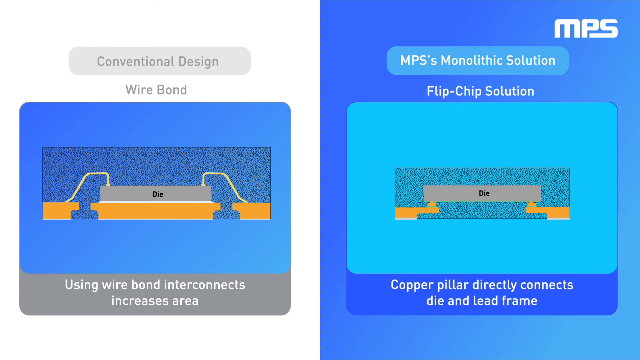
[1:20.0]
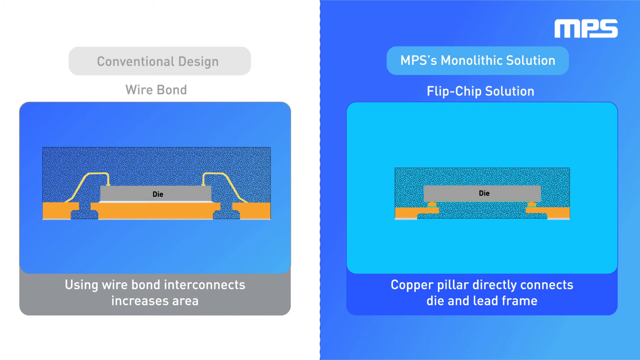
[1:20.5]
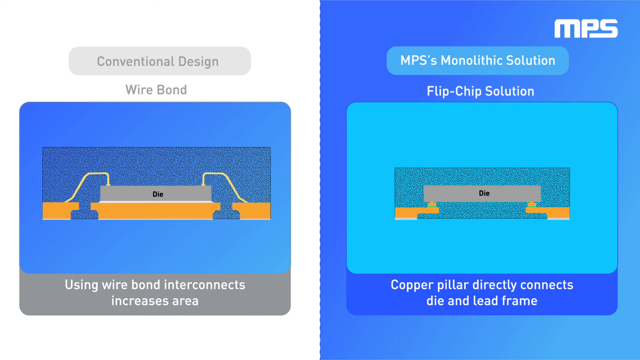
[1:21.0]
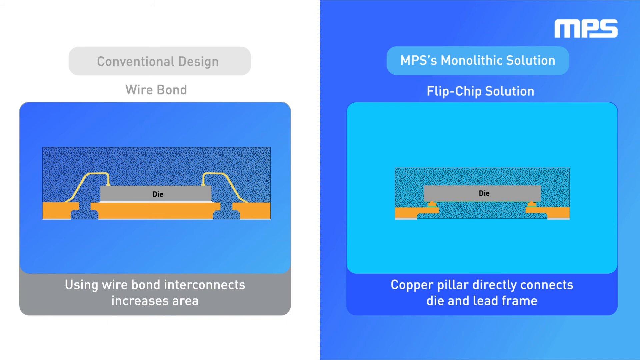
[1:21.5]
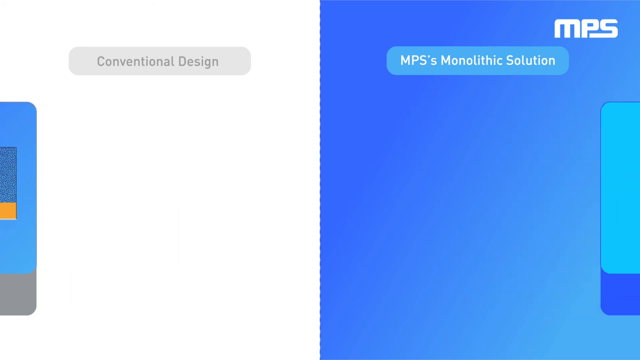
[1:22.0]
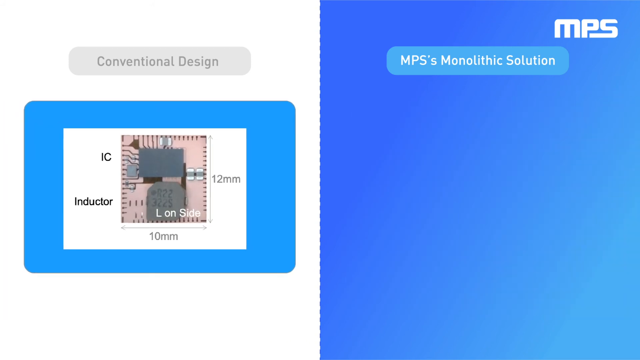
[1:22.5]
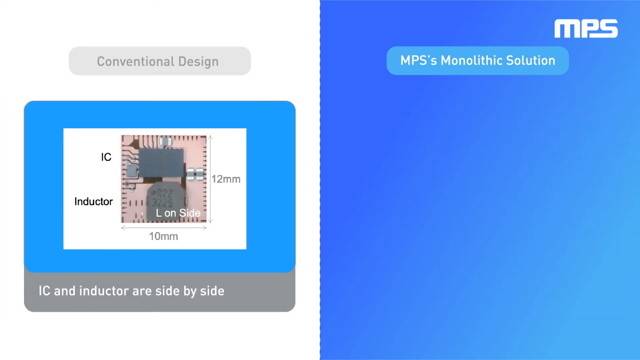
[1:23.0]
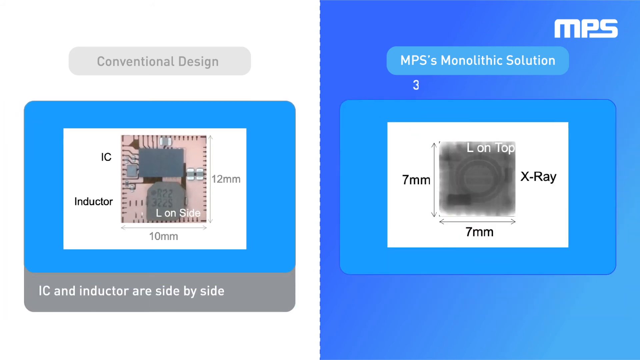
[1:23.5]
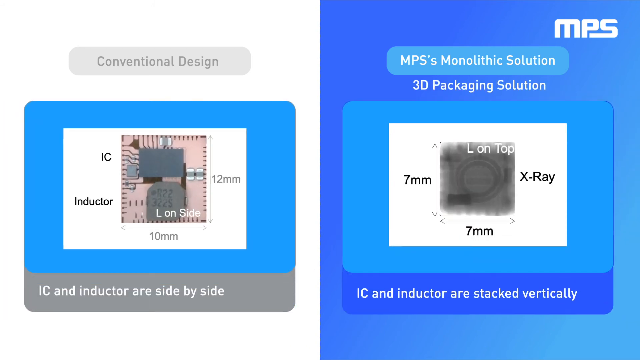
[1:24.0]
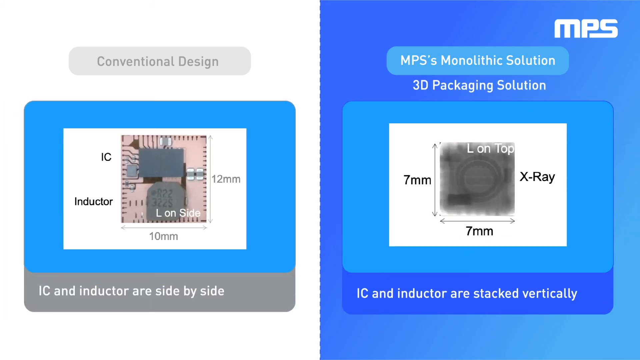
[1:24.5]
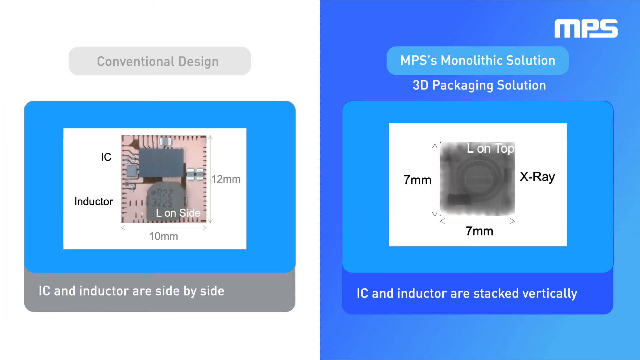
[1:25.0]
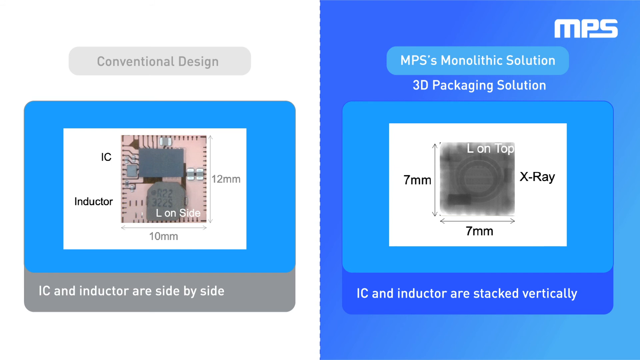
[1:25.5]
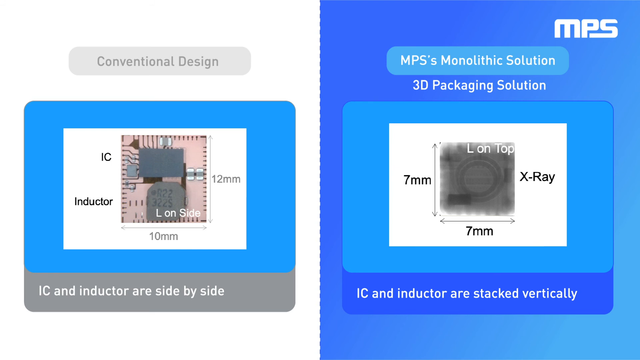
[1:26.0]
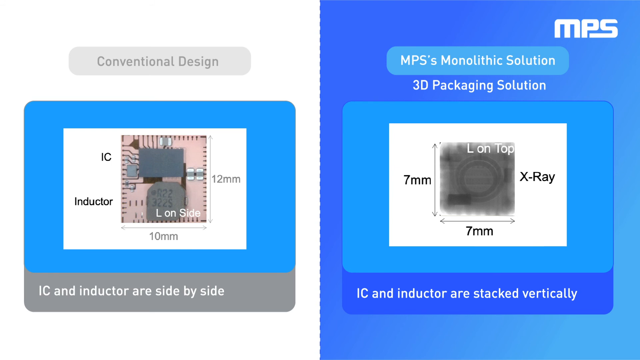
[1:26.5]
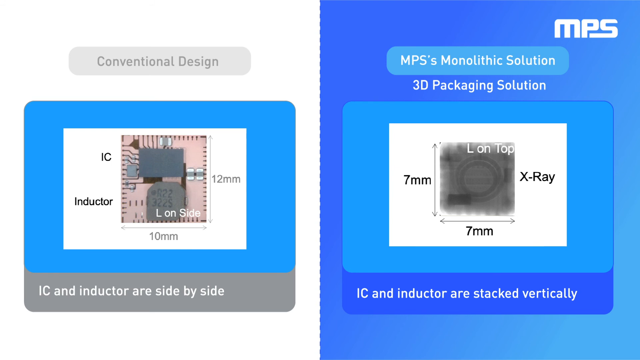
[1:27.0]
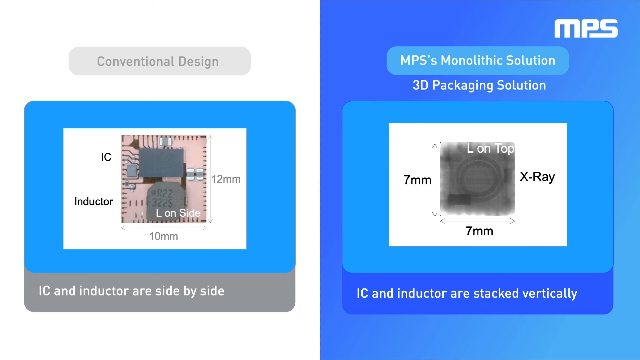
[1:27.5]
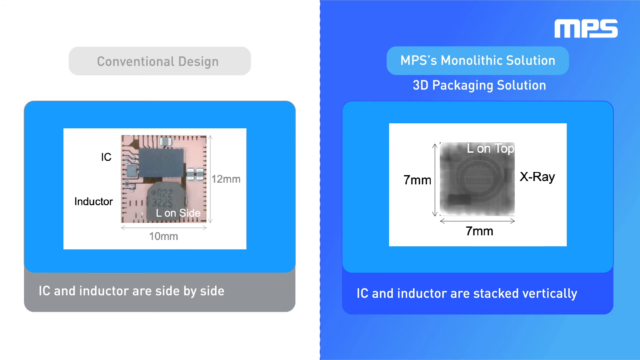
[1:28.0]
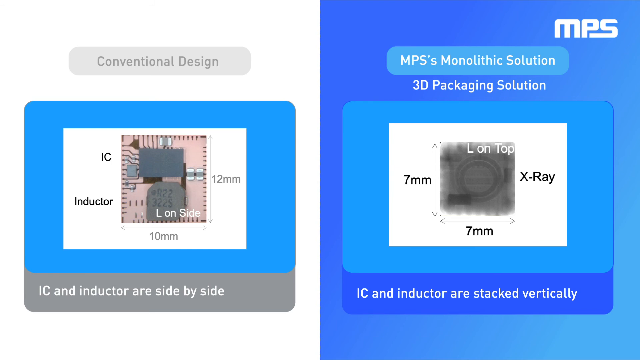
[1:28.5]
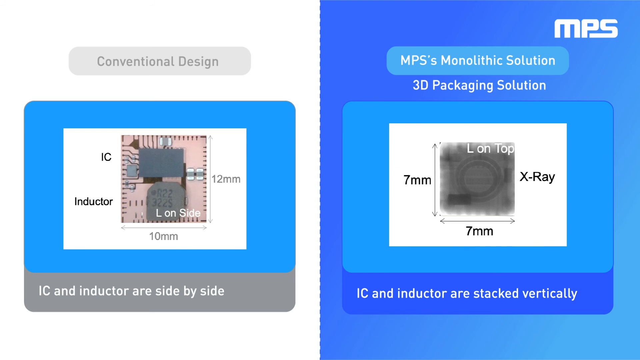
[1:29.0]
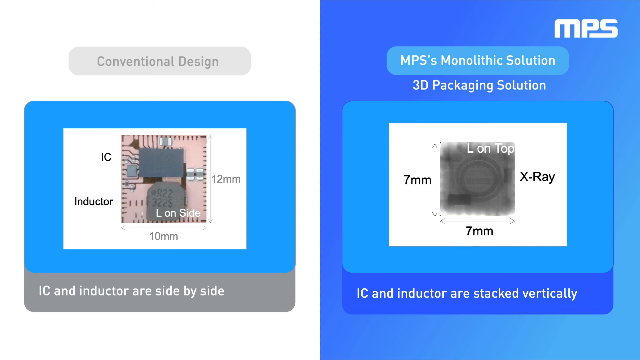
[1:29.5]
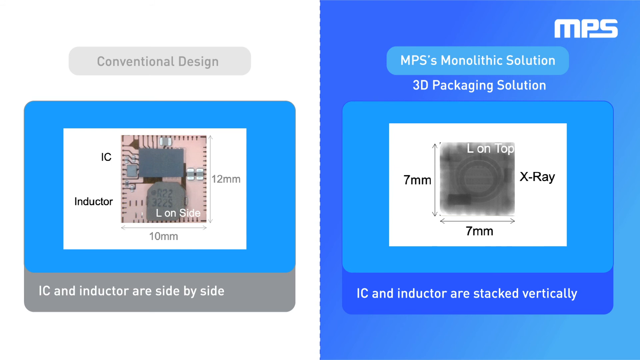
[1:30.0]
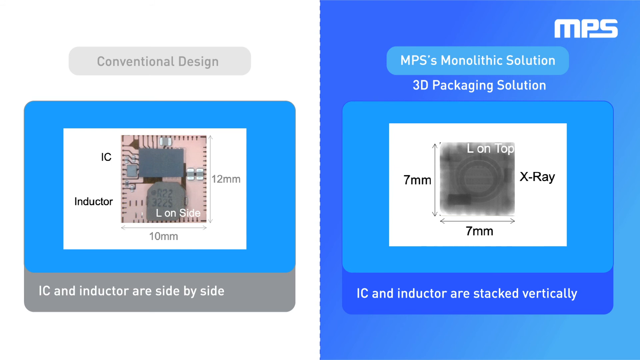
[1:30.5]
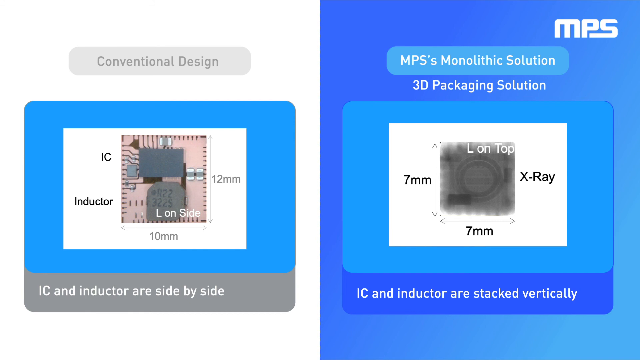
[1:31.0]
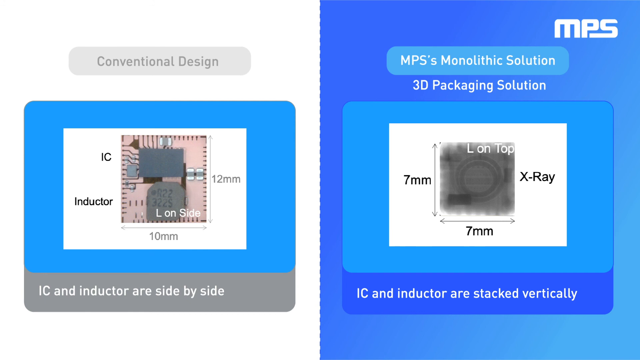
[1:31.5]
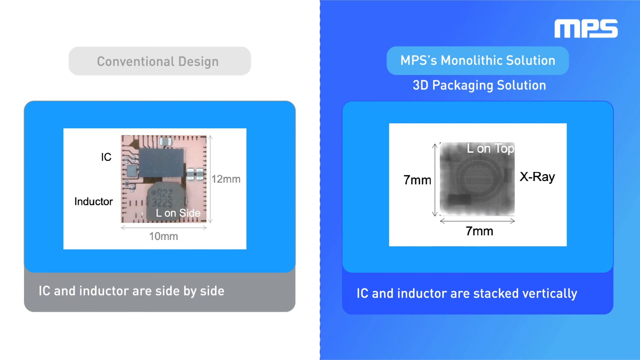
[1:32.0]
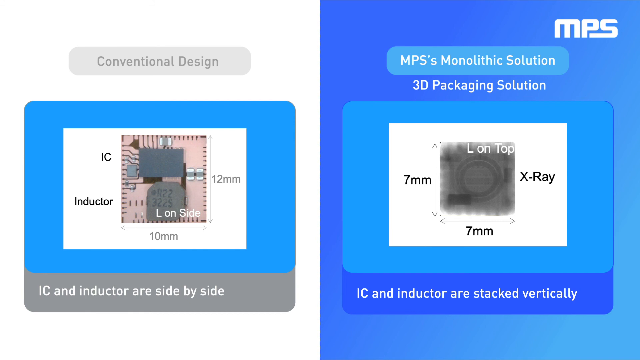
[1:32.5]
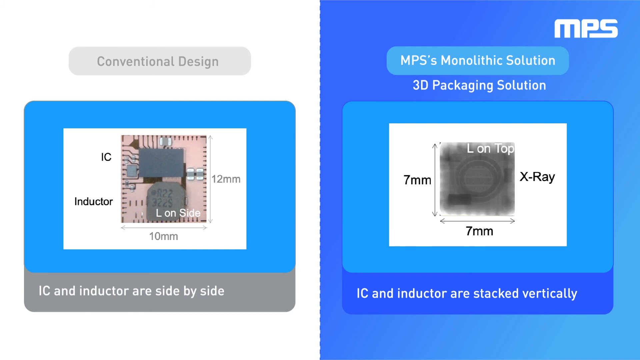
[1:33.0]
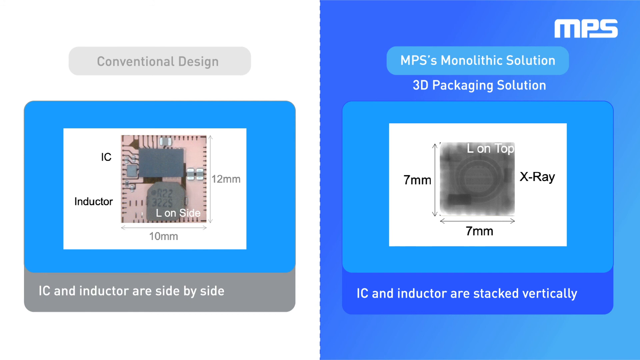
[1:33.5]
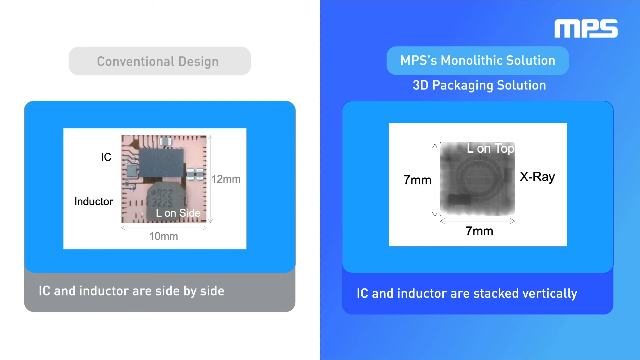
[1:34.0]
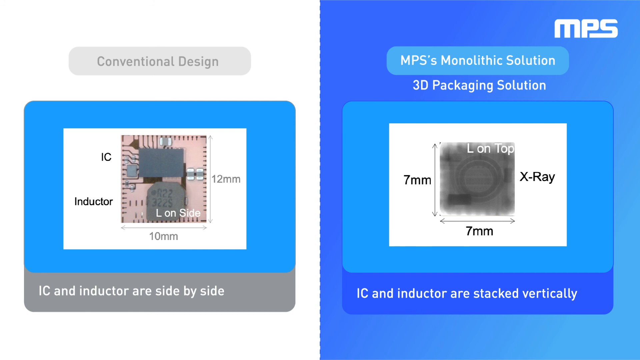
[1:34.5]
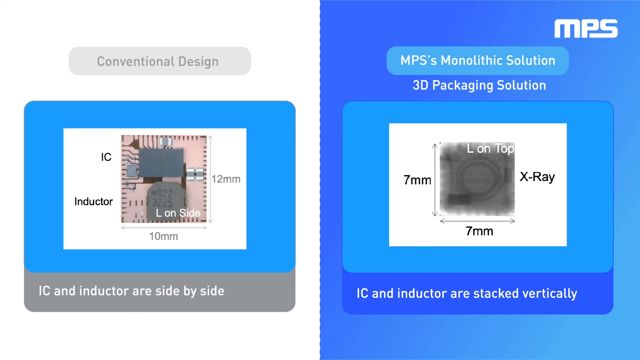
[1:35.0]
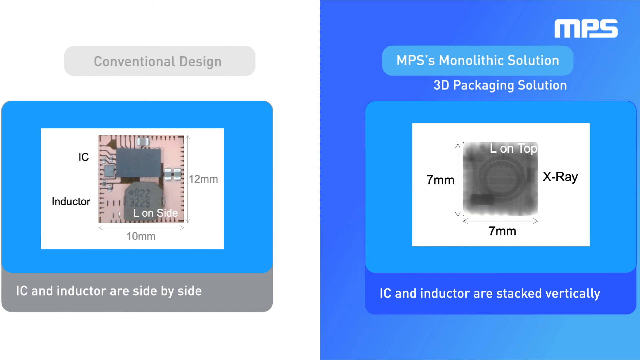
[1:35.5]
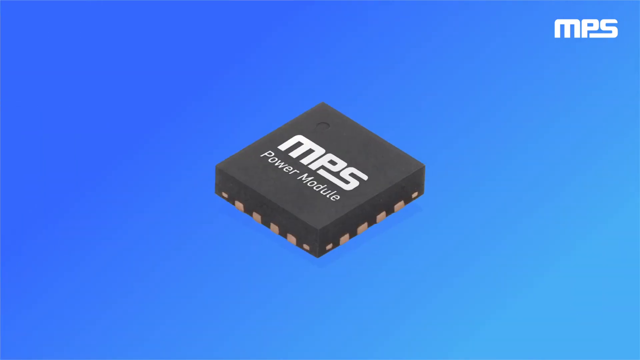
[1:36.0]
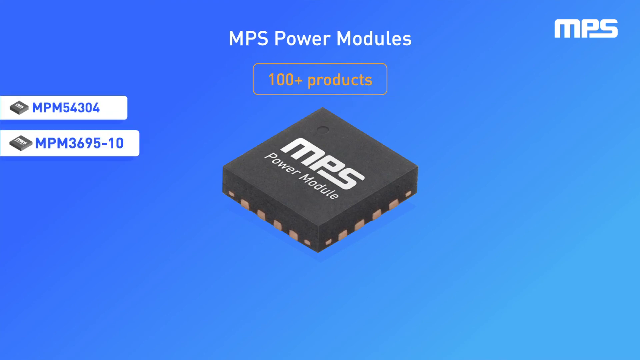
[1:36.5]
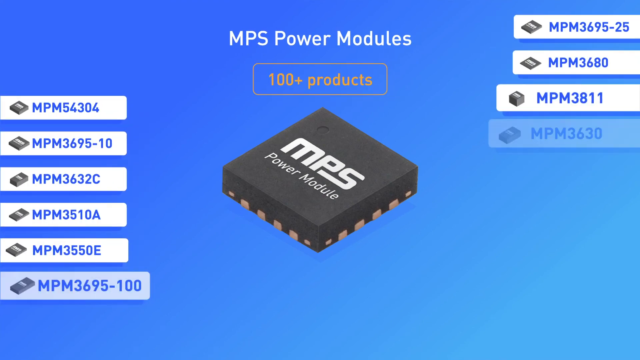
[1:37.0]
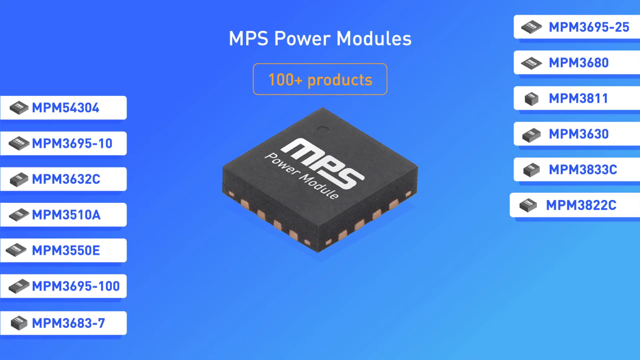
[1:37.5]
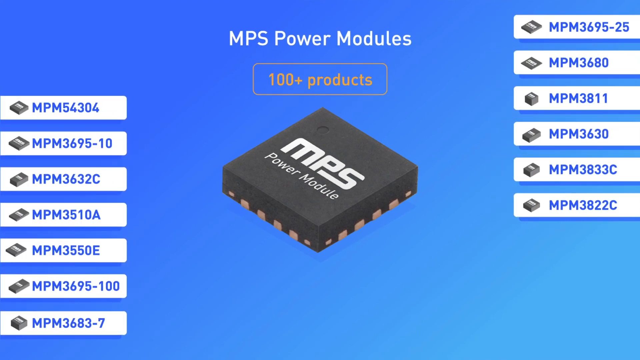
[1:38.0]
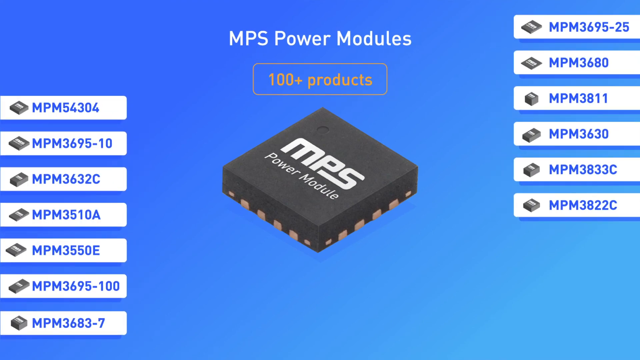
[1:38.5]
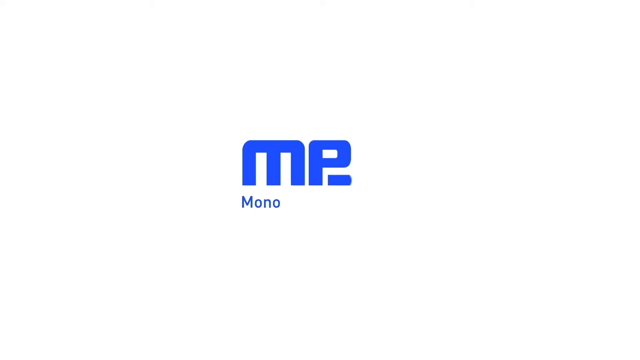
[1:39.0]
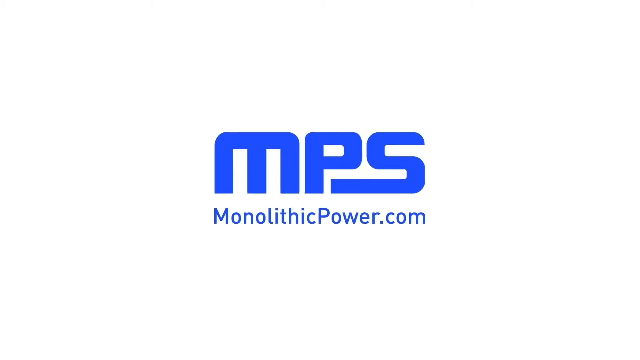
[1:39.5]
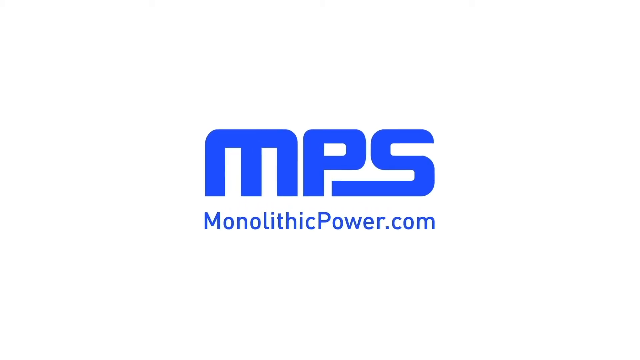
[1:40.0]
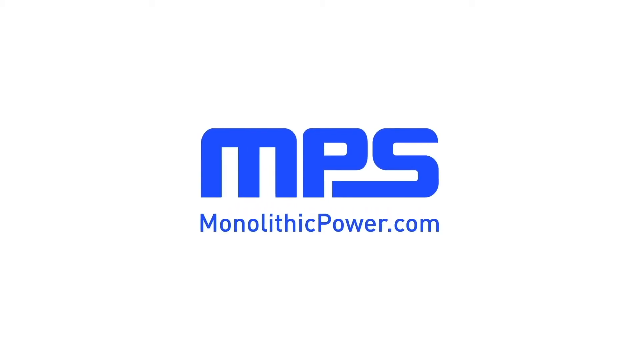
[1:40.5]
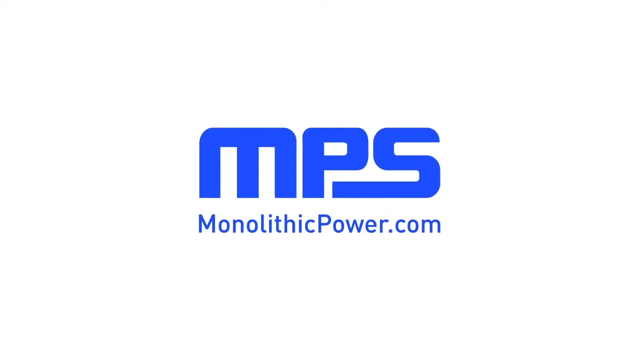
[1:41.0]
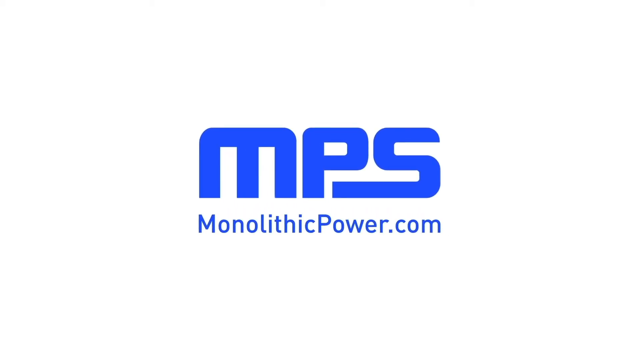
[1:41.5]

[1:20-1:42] The two-sided screen changes again, now showing actual photos of circuit boards instead of diagrams and illustrations. The photo on the right side, for the MPS solution, is an X-ray, while the one on the left is more of a regular image. The description under the left side states "IC and inductor are side by side", whereas the right side says "IC and inductor are stacked vertically". The right side has a smaller area, 7 by 7 rather than 12 by 10 millimeters. What appears to be an outro screen follows, showing the MPS Power Module, the black square from the beginning with the MPS logo on it. In the middle and at the top of the screen are the words "MPS Power Modules", and underneath is an orange badge that says "100 plus products". On both the left and right sides of the screen is a list of product codes, presumably advertising products. The video ends with a white screen showing the MPS logo with the link "monolithicpower.com" underneath.